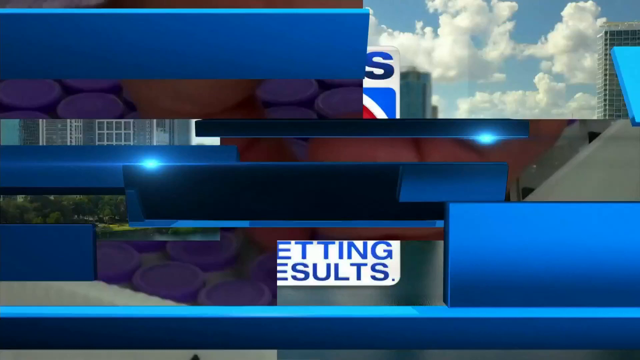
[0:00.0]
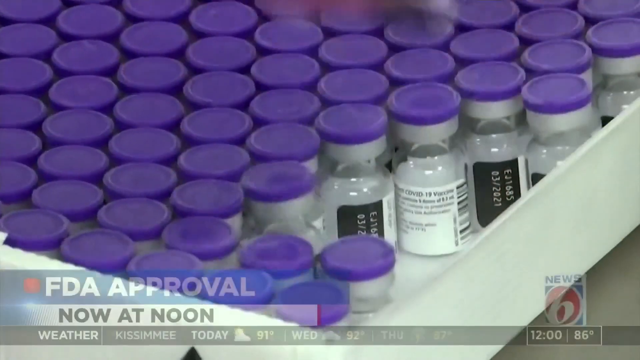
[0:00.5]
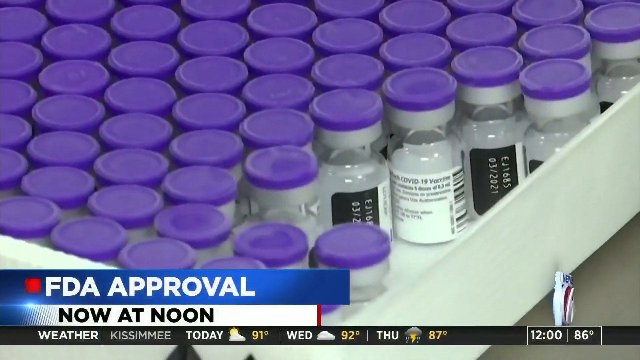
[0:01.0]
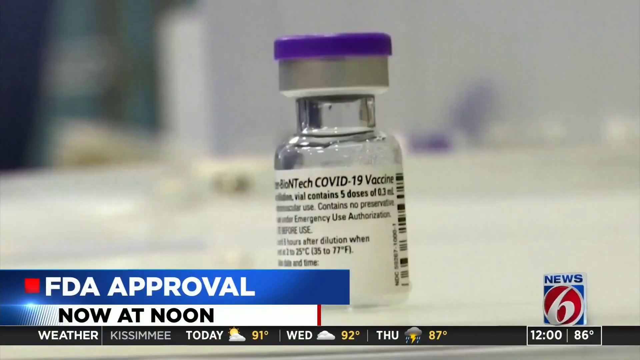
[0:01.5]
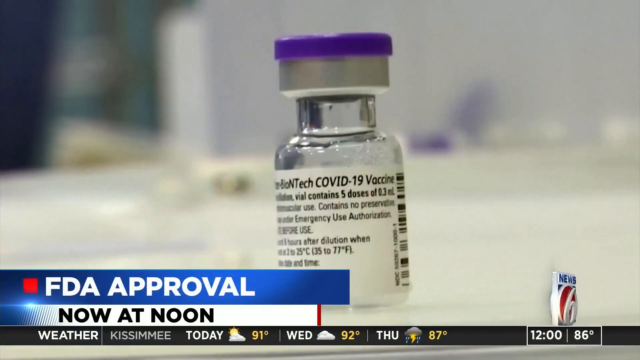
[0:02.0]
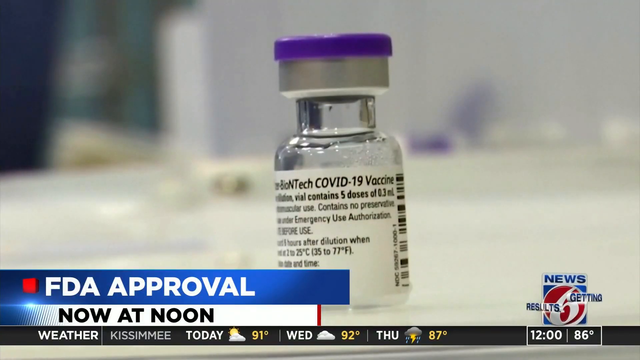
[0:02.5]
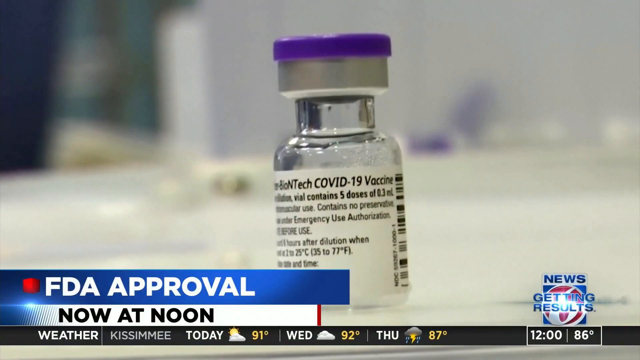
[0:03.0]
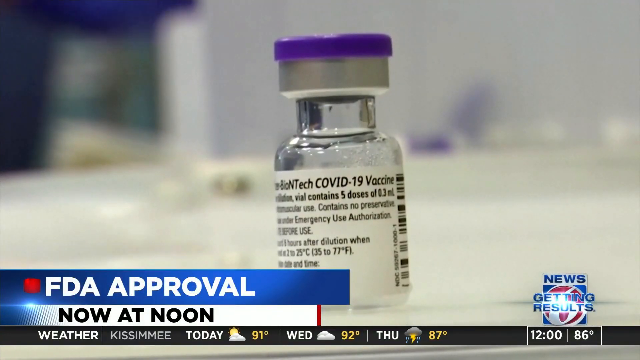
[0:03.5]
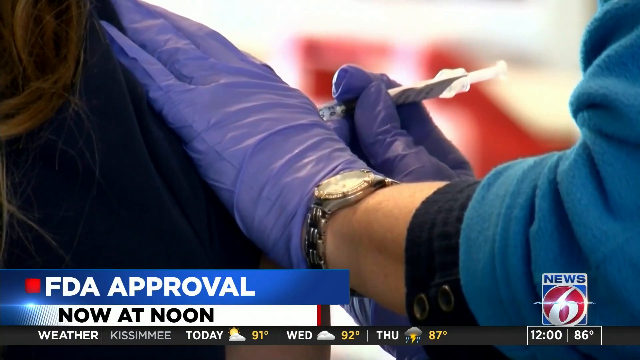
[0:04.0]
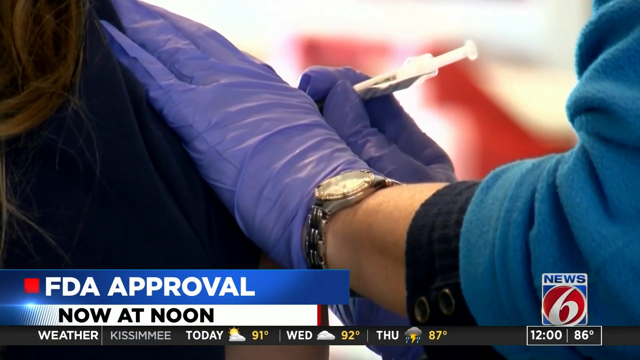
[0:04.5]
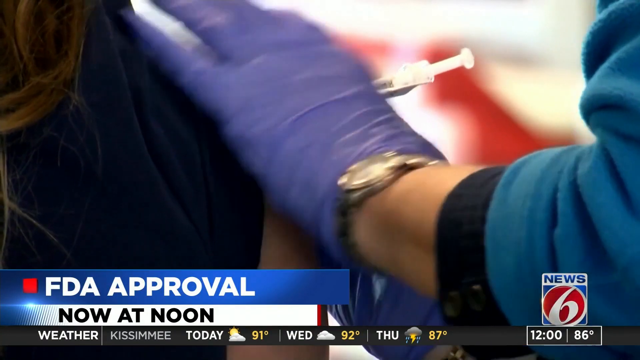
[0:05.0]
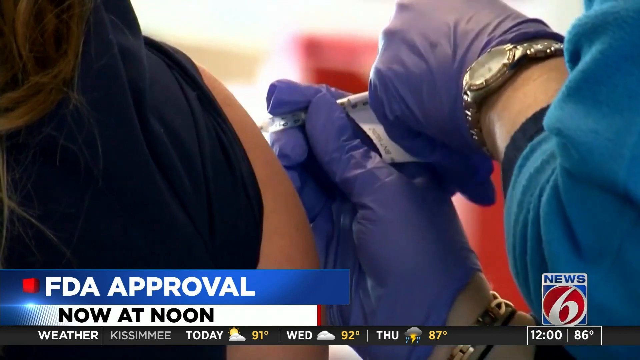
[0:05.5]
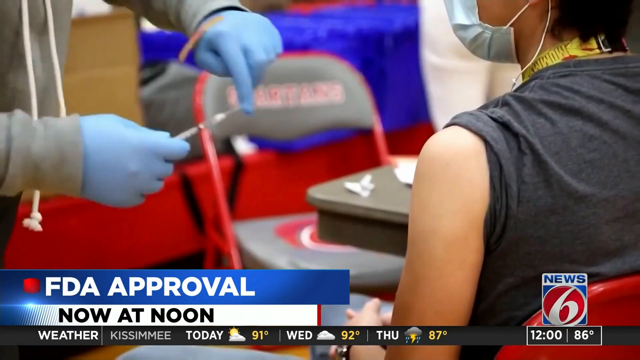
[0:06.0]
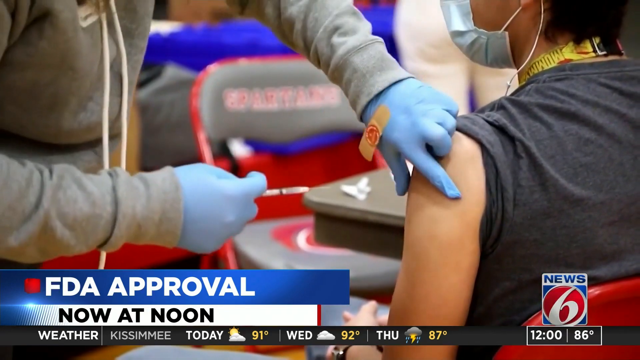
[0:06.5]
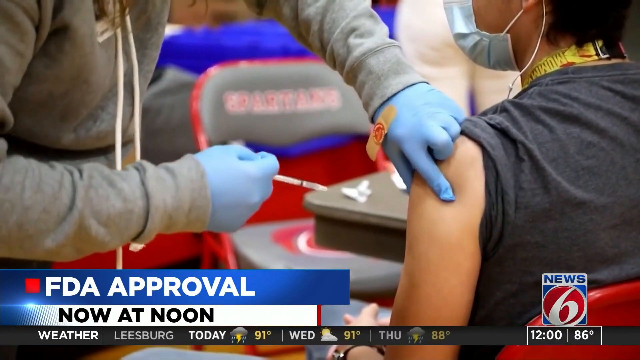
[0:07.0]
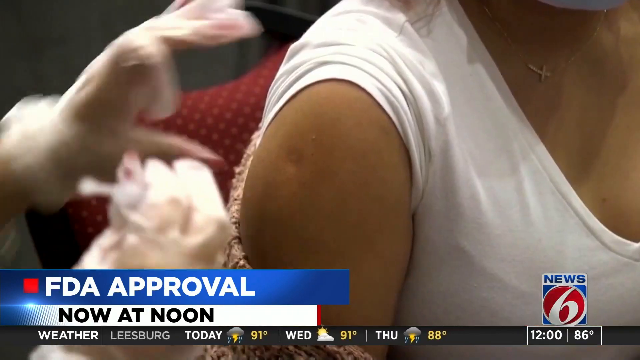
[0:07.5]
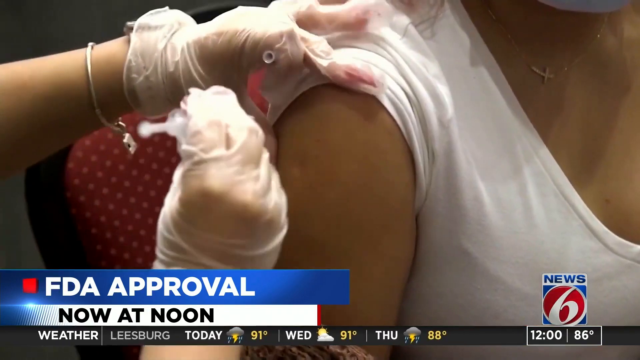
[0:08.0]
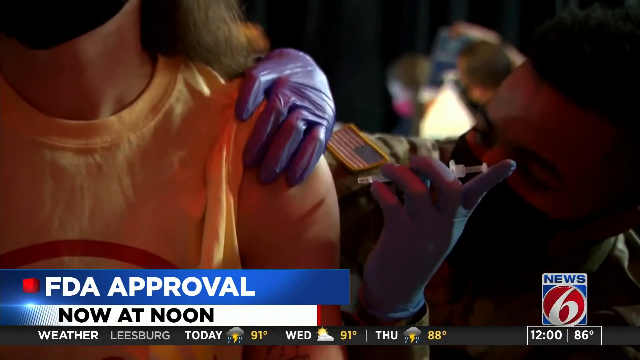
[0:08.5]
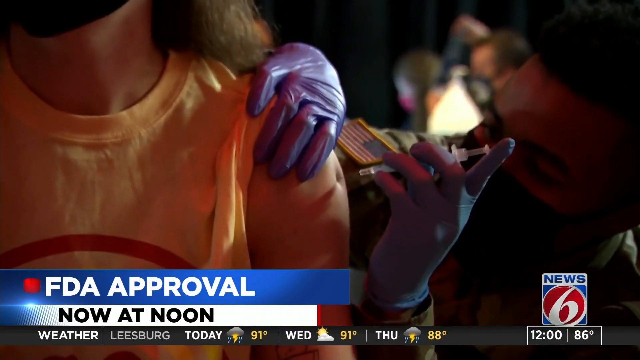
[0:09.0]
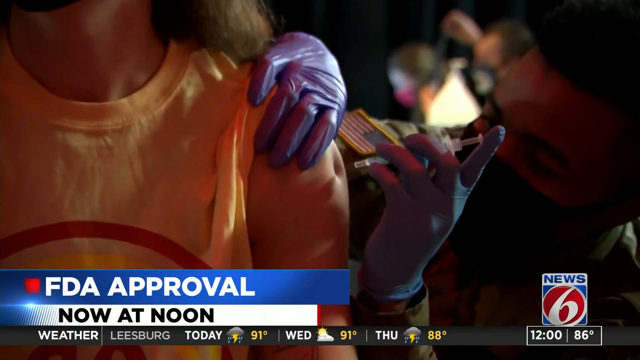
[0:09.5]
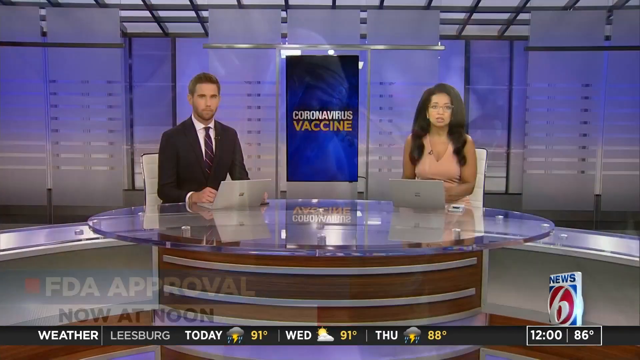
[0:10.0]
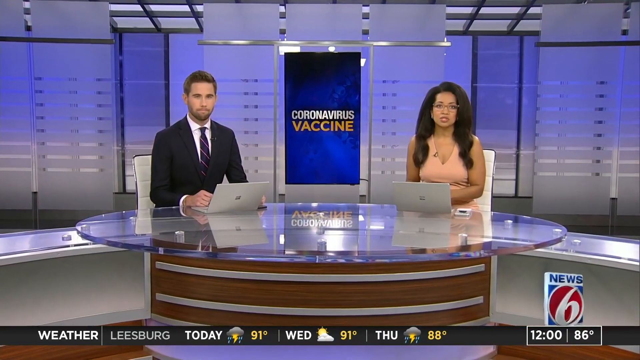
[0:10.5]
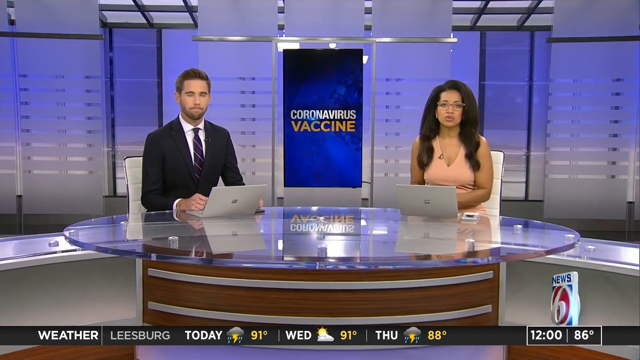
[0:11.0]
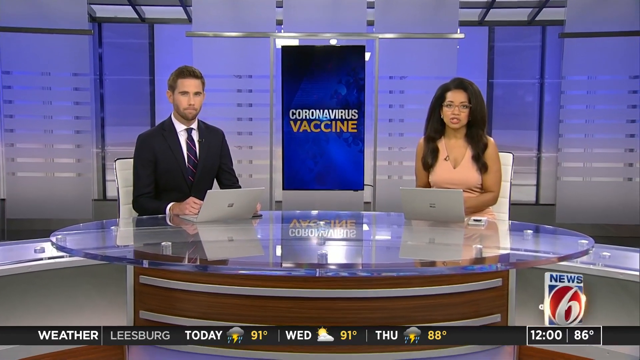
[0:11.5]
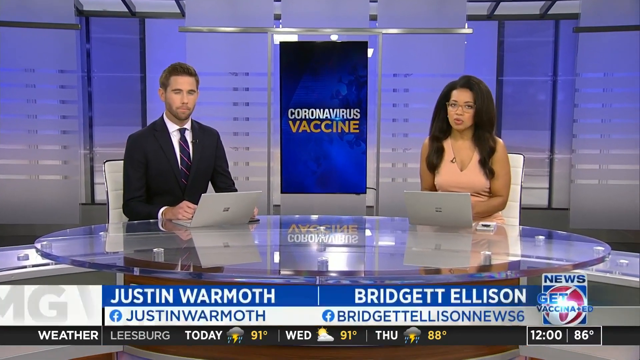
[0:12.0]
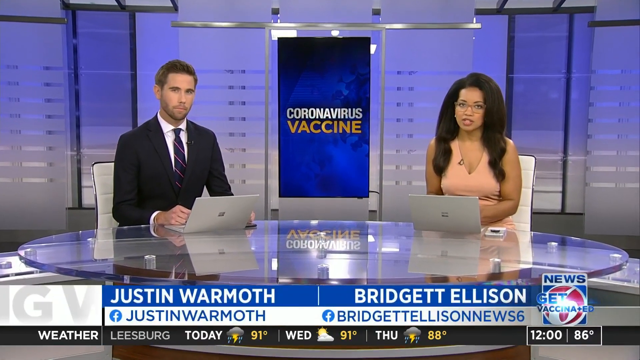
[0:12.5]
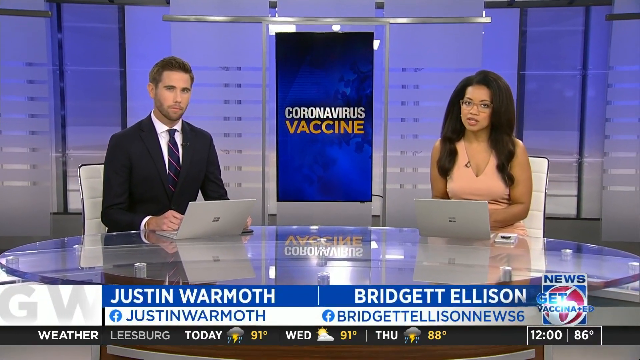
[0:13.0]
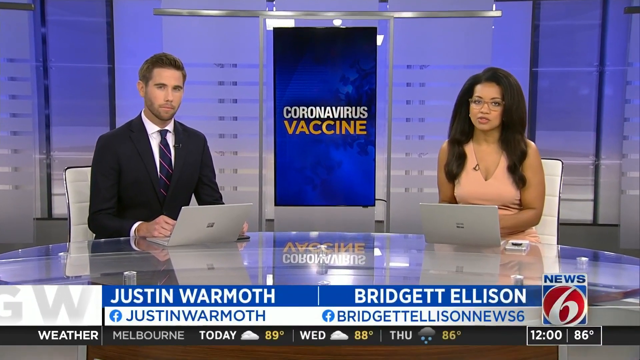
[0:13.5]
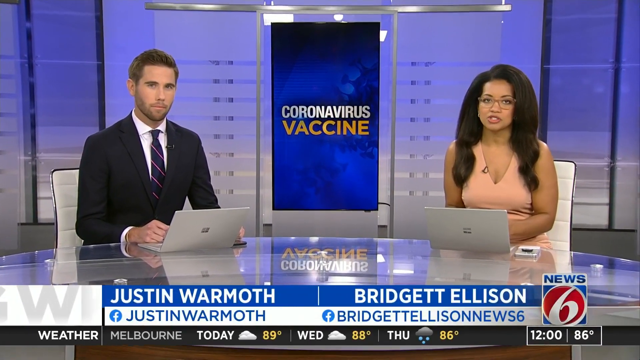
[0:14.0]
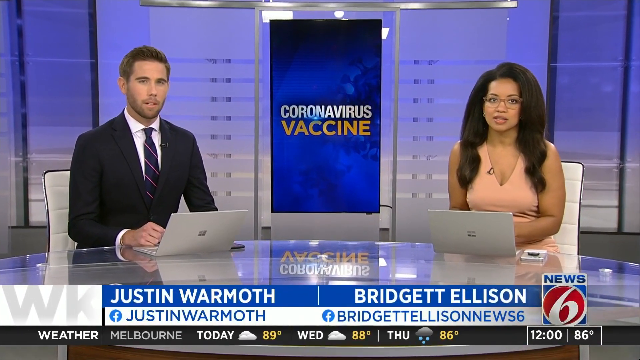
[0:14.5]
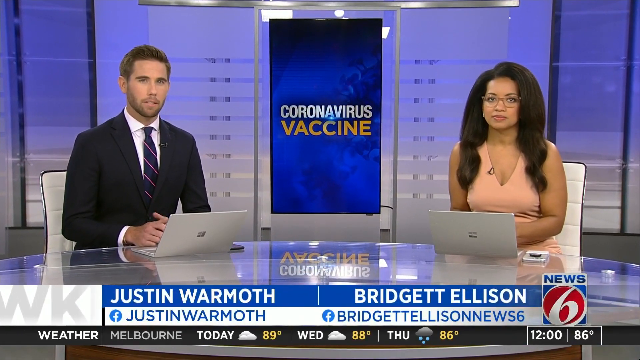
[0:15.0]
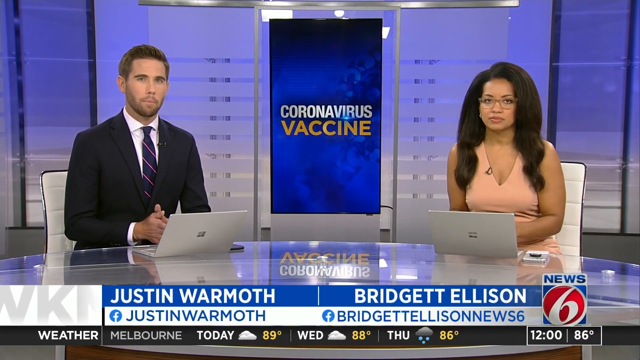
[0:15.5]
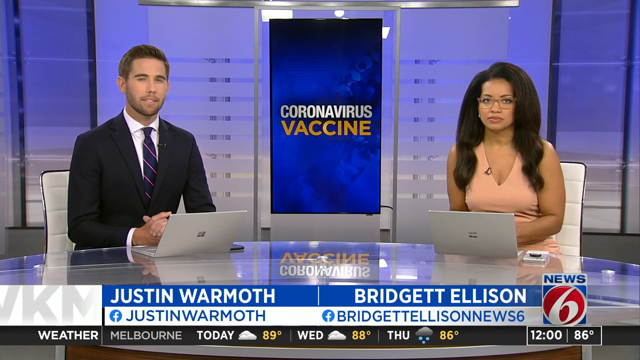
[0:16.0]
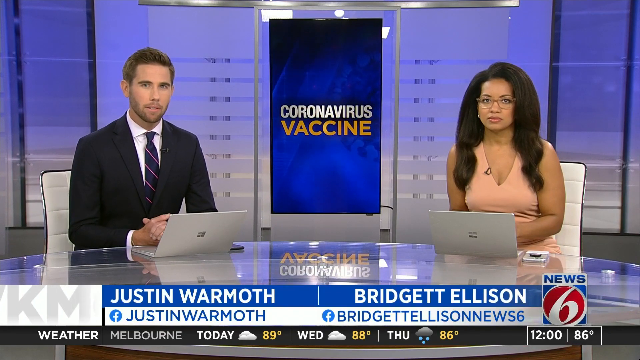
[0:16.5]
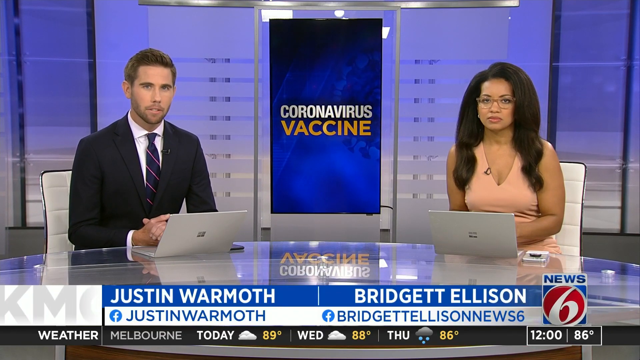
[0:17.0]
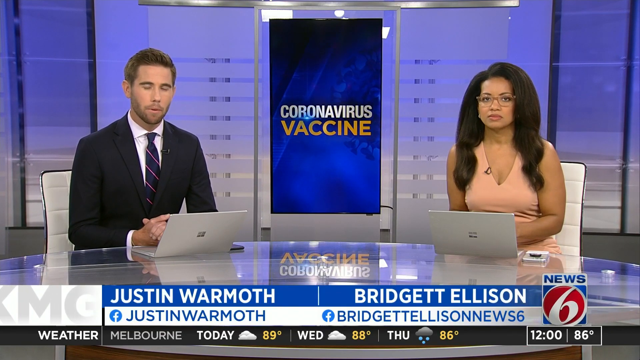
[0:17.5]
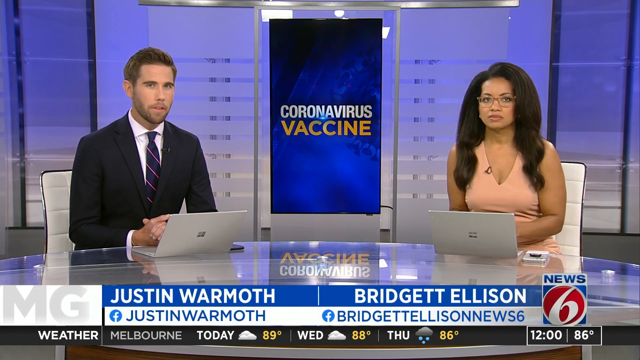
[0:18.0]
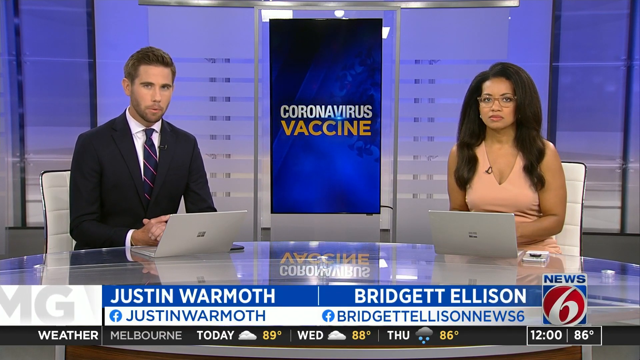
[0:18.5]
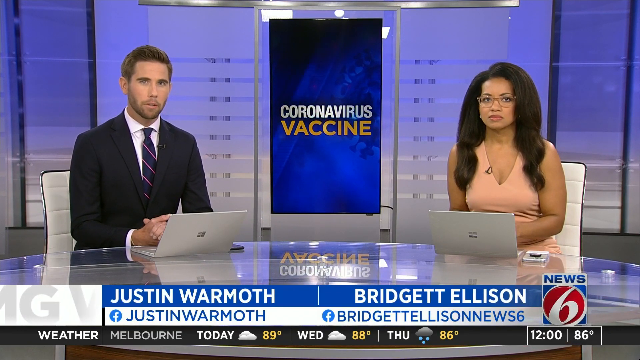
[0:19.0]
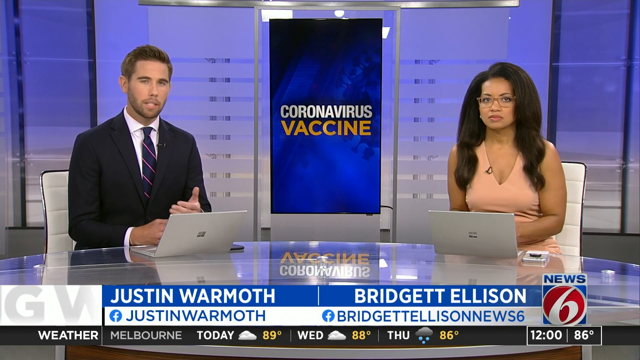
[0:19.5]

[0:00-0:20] Many vials of COVID-19 vaccine appear, followed by footage of many different kinds of people getting the vaccine in their arms. Their faces are not really visible, but different caregivers can be seen administering the vaccine into people's arms. The story about the coronavirus vaccine is presented by Justin Wormuth and Bridget Allison, who sit at a news desk with very thin laptops in front of them. Behind them is what is kind of a frosted glass wall with what looks to be a screen in the middle.